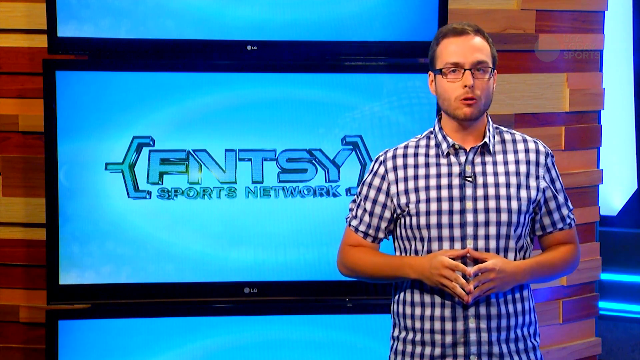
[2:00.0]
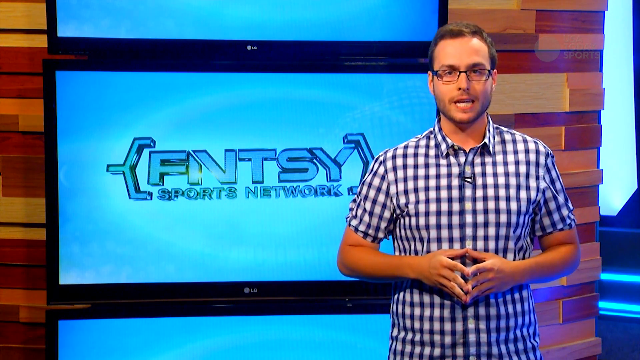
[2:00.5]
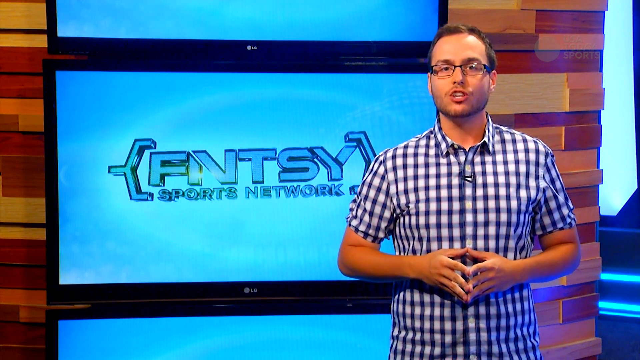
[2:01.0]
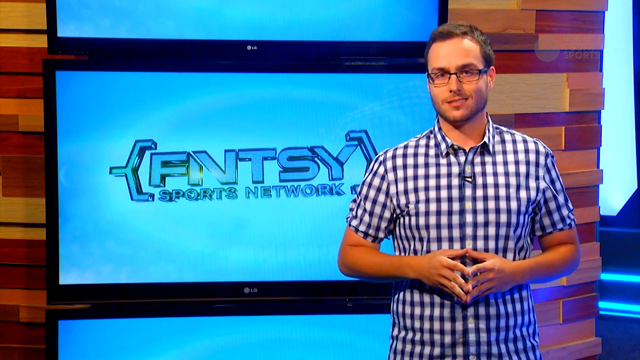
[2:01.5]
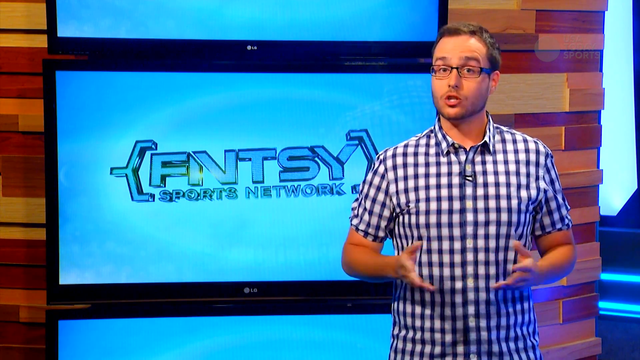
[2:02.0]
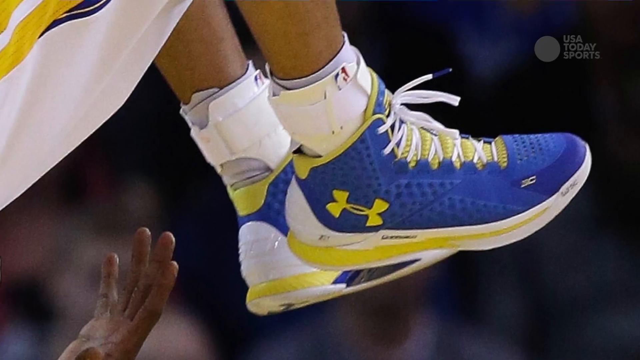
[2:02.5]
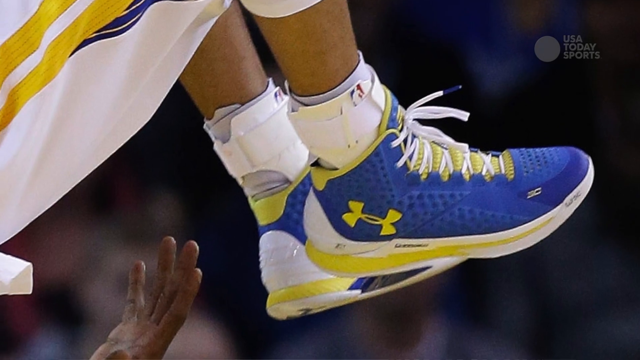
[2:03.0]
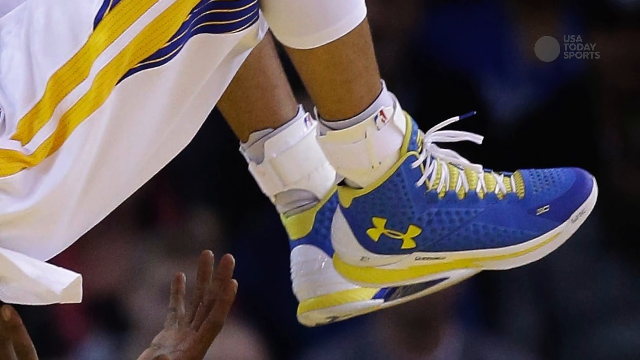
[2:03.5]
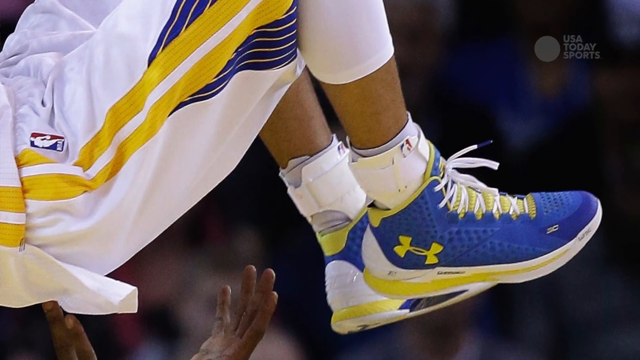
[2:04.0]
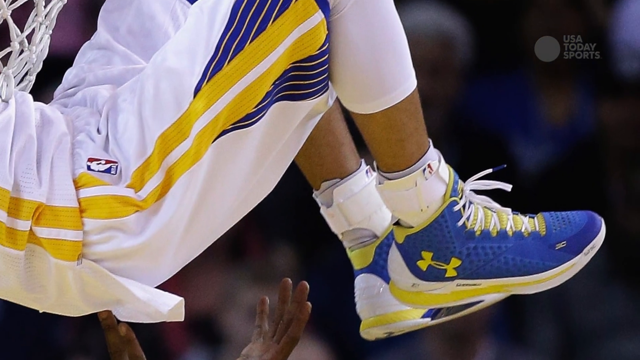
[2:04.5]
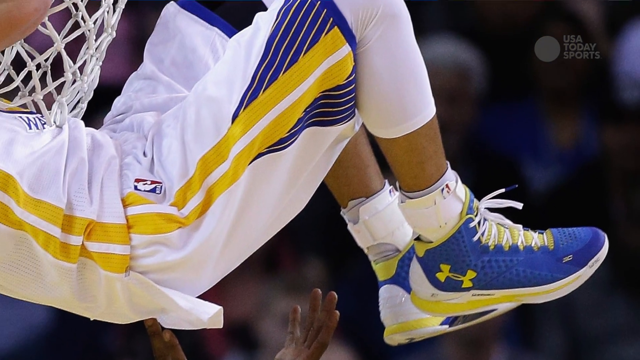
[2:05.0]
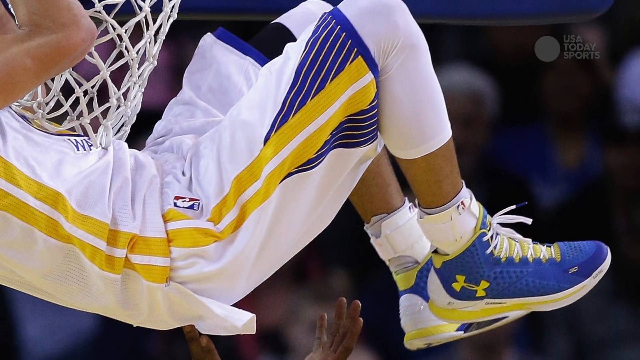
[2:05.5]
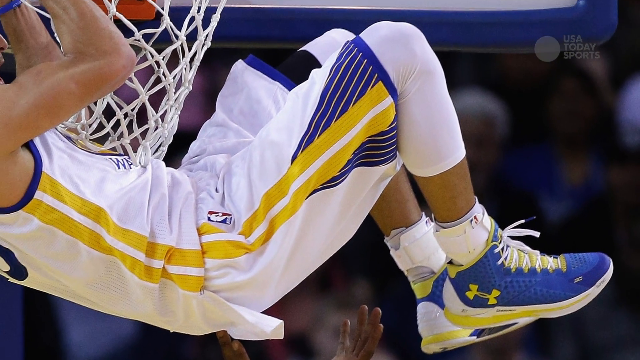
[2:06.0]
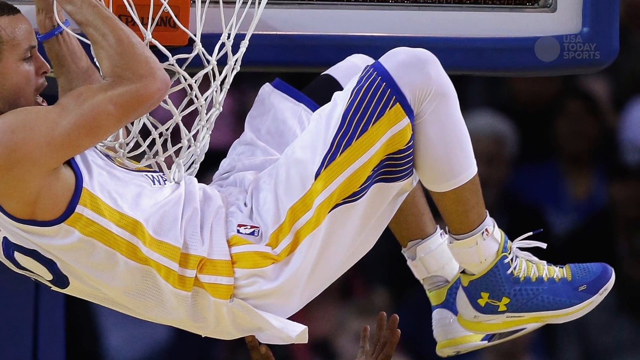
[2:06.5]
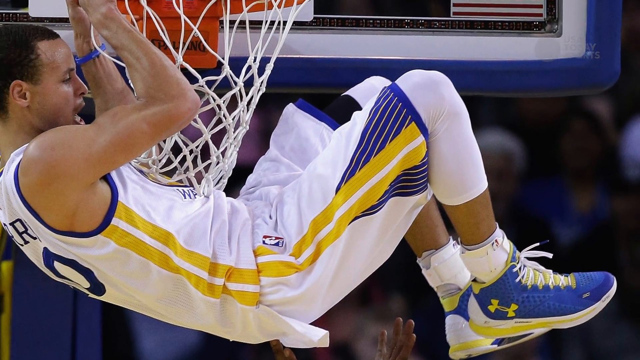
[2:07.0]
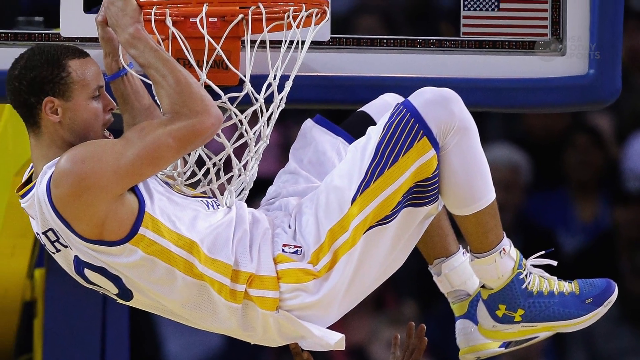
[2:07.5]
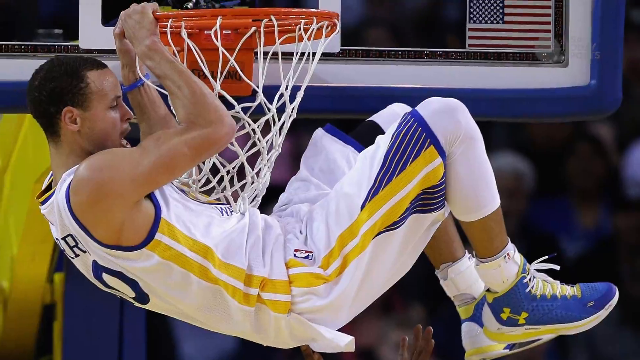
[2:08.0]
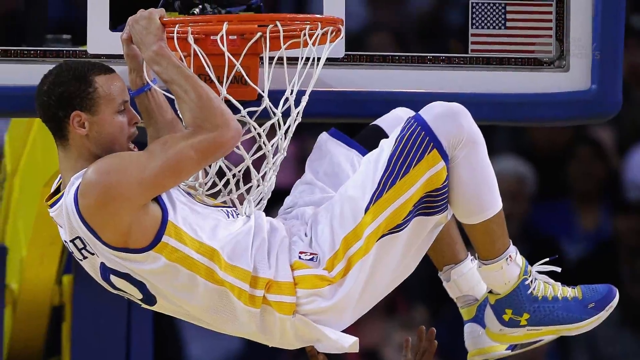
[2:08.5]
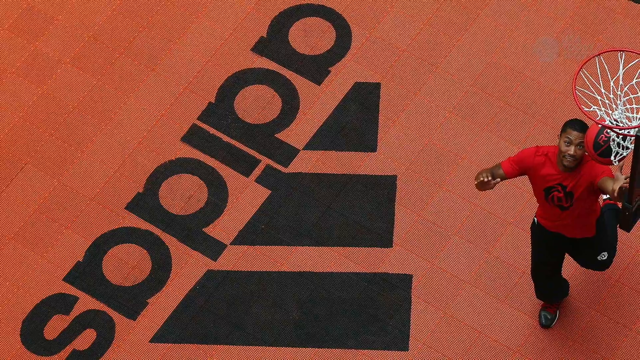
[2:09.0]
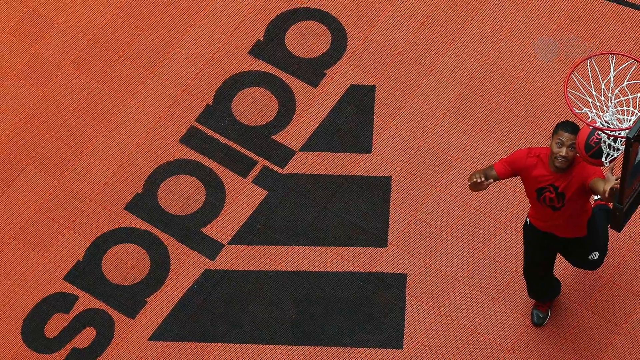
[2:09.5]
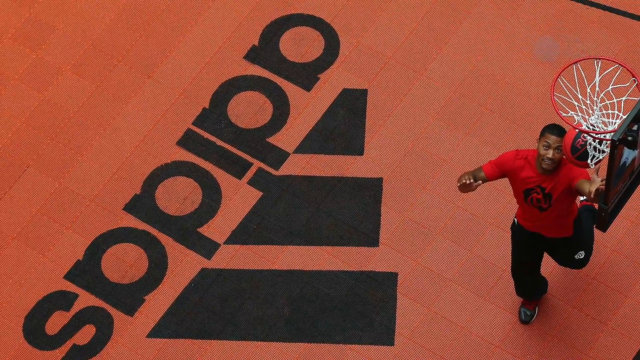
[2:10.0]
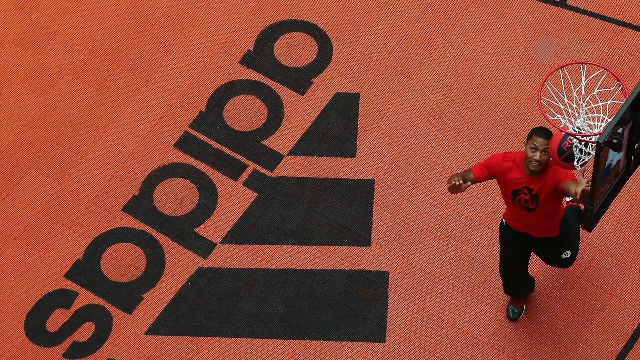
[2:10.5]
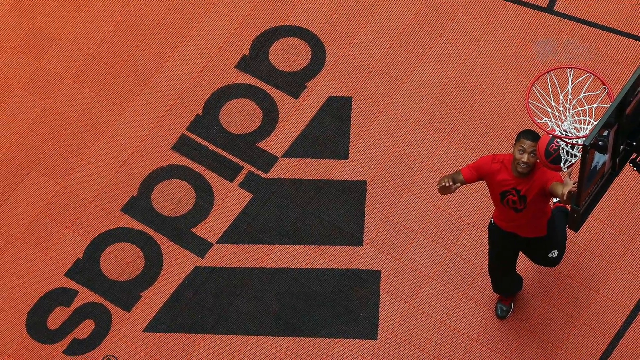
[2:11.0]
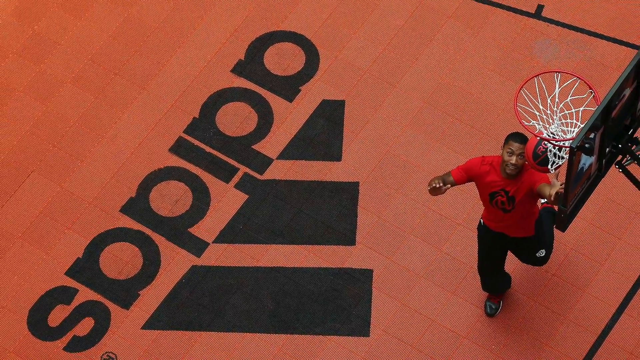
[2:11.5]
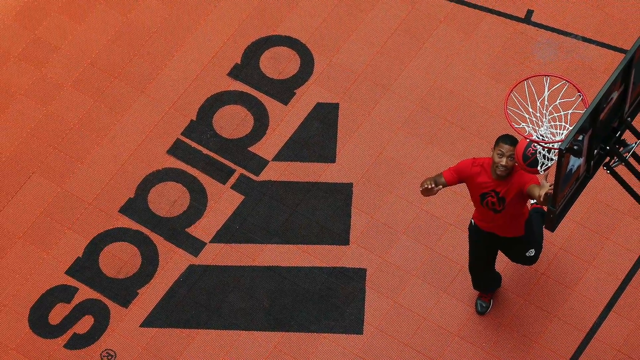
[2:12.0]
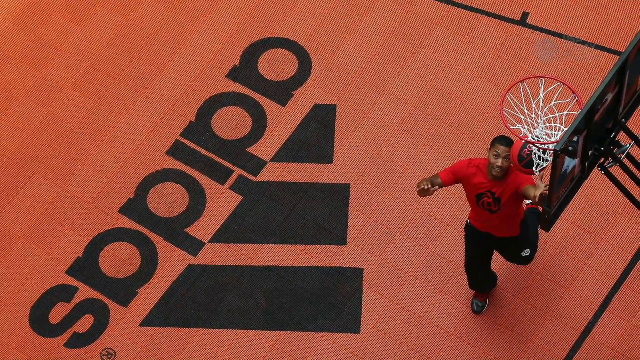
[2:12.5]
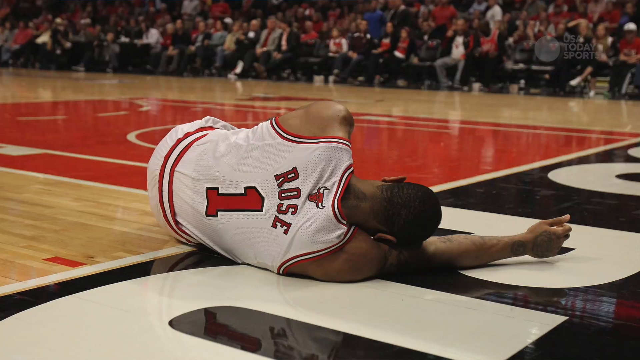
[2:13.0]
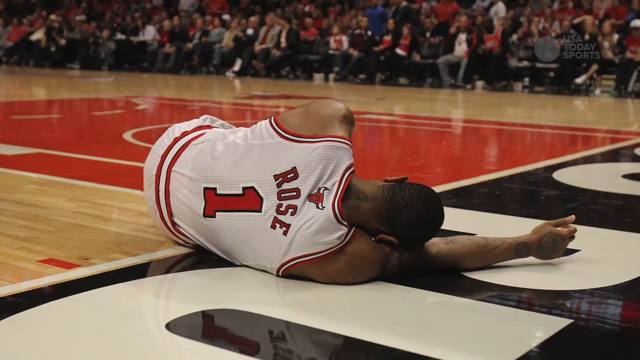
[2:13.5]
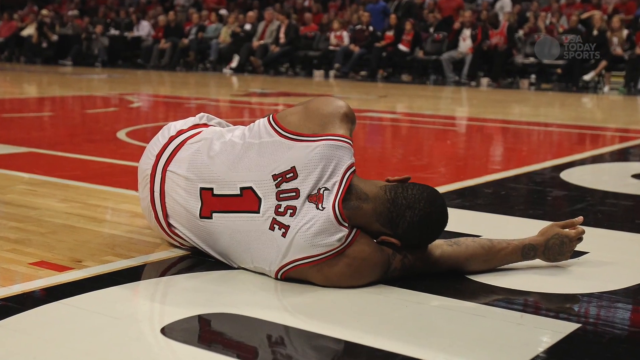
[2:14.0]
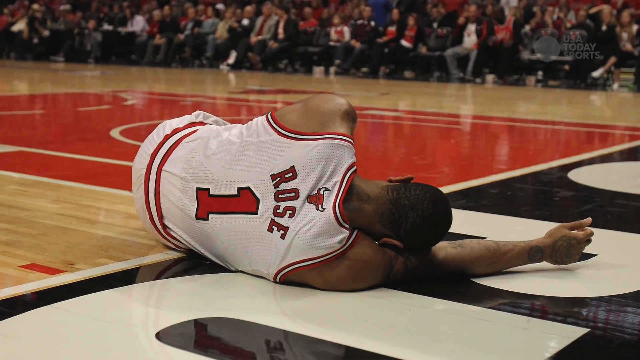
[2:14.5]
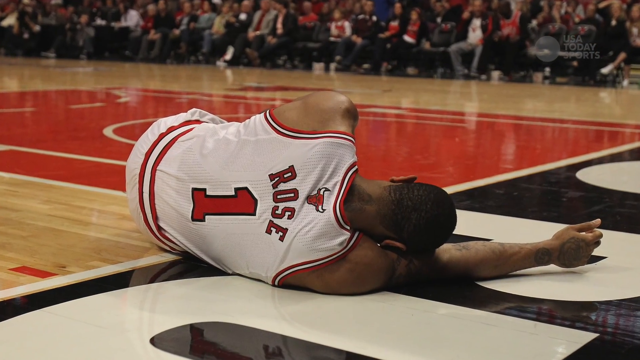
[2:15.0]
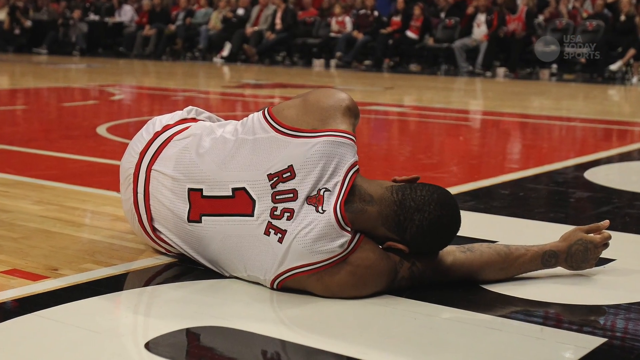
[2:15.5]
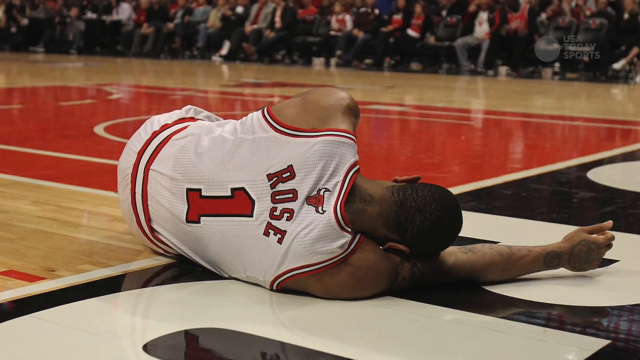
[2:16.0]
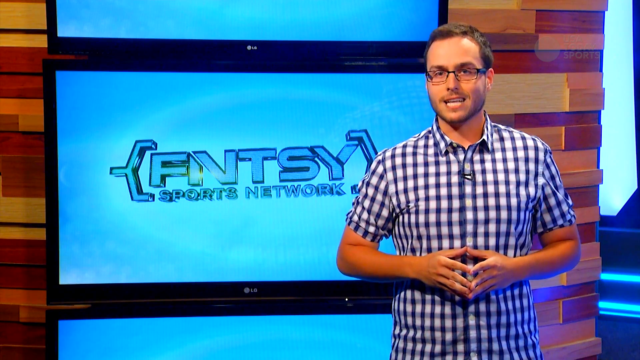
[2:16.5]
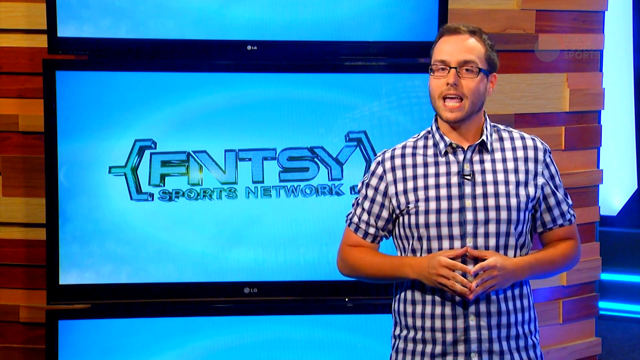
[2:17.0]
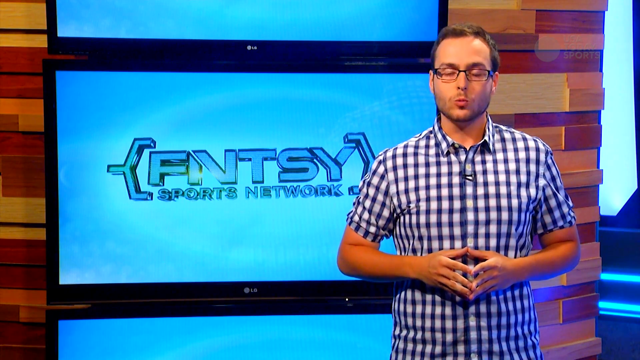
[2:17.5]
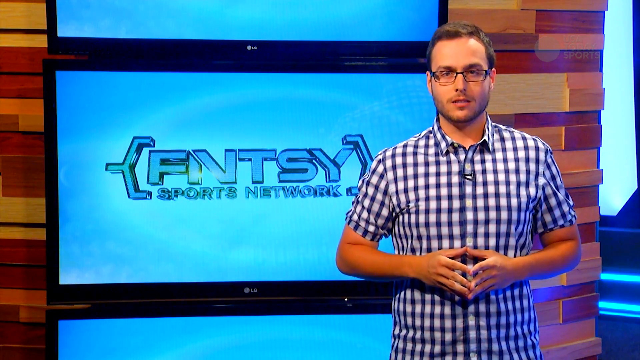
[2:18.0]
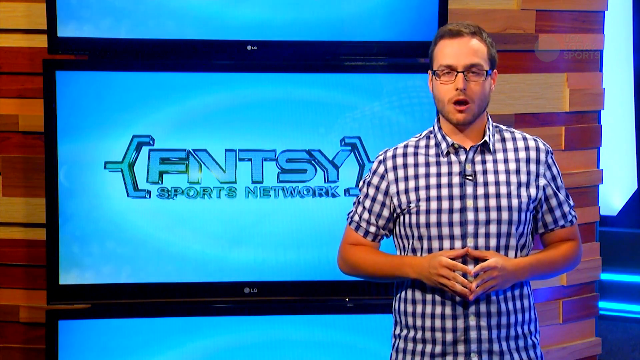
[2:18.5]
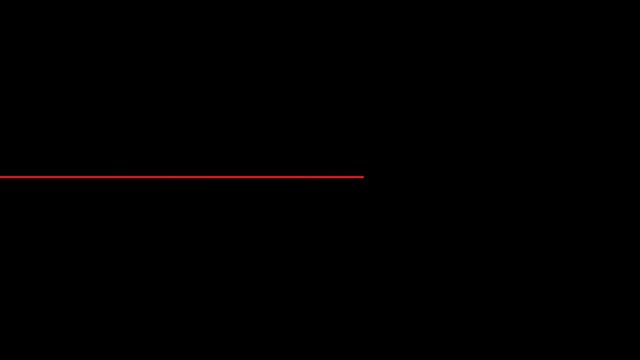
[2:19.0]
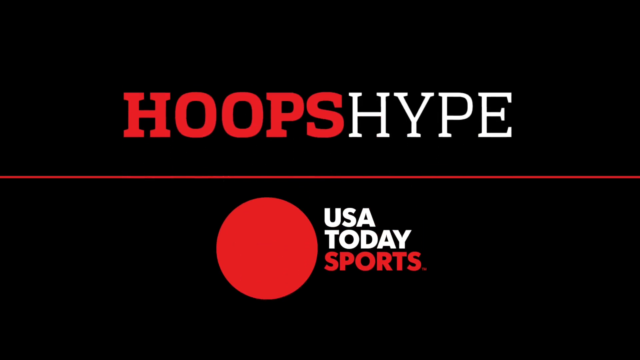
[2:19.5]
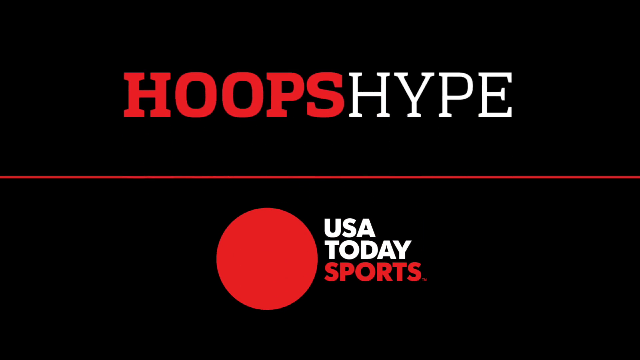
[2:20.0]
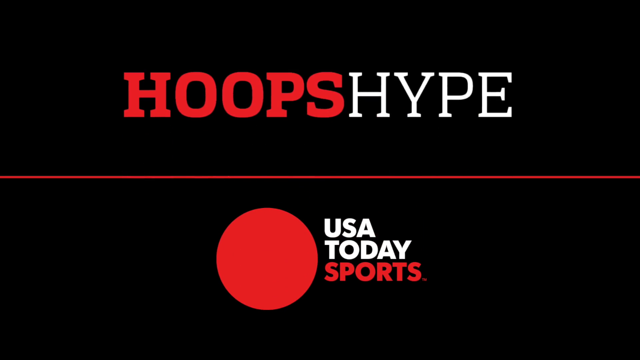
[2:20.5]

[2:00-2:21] A sportscaster stands in front of a bright blue screen that says "FNTSY." Blue Under Armour basketball shoes with yellow trim are worn by a player hanging from the net in a C-shaped curve with both hands on the net; he wears a white jersey with a stripe down it. A floor that says "Adidas" appears, with one person running. A player, number one, Rose, is lying on his right side in the middle of the floor, possibly toward the zone, though the angle makes it hard to tell. No one else is visible at this time.